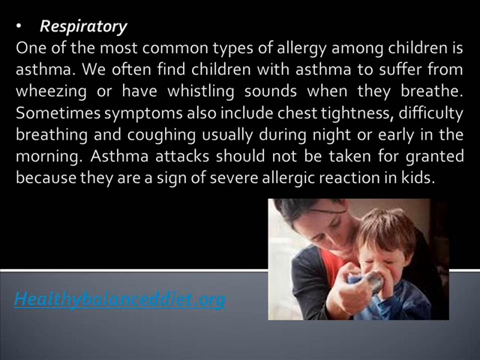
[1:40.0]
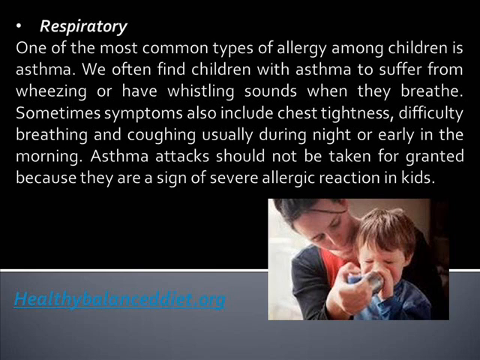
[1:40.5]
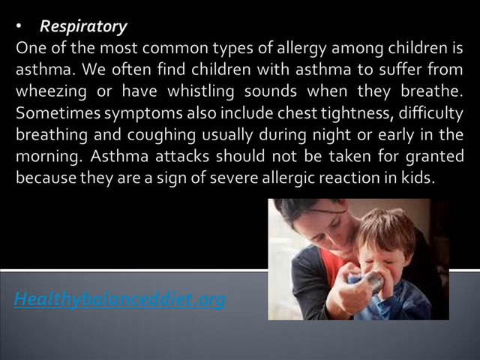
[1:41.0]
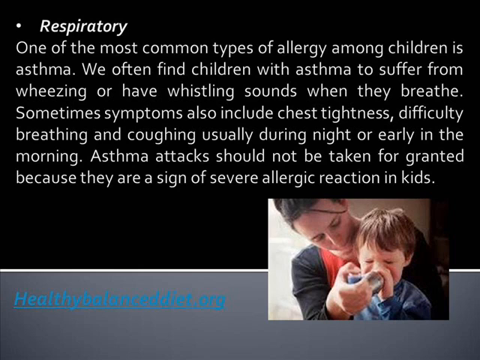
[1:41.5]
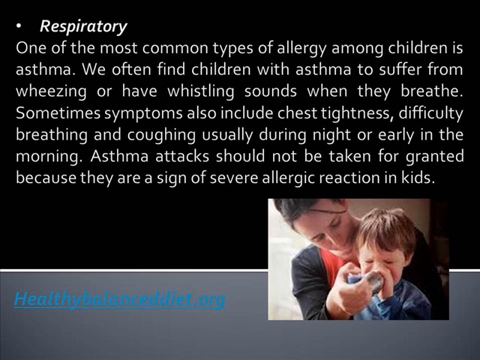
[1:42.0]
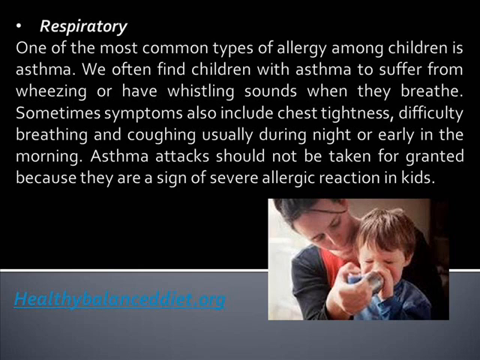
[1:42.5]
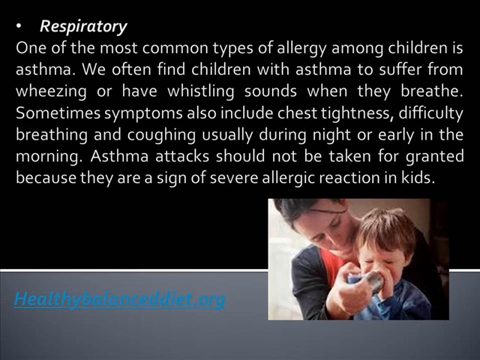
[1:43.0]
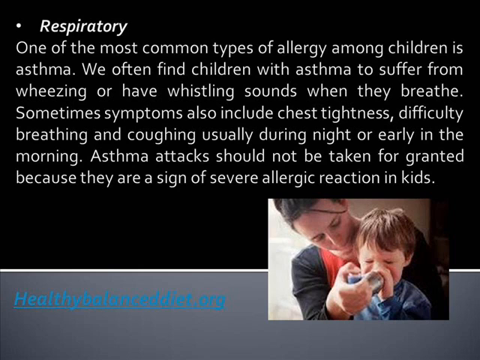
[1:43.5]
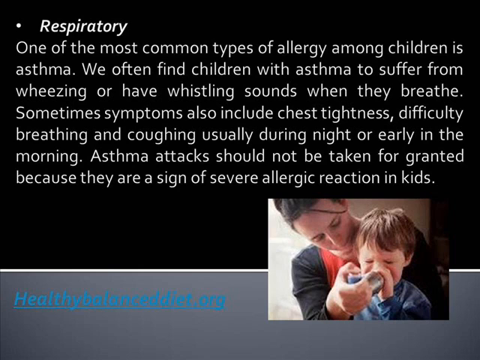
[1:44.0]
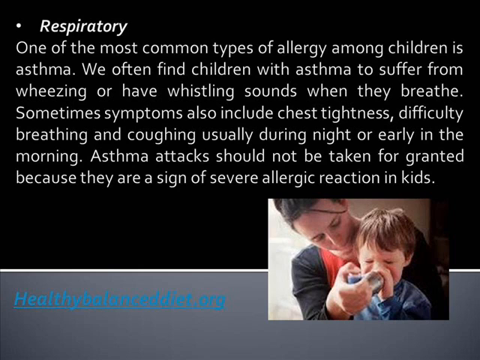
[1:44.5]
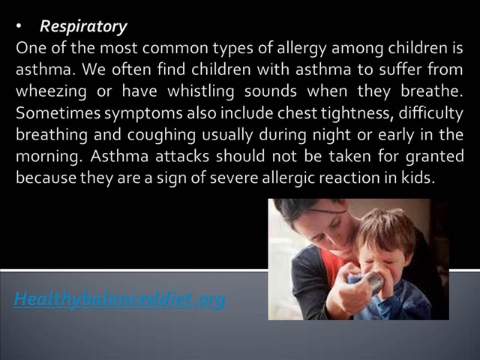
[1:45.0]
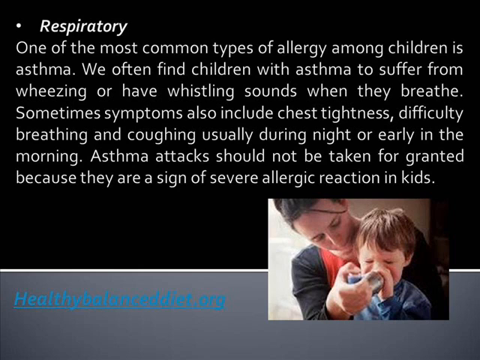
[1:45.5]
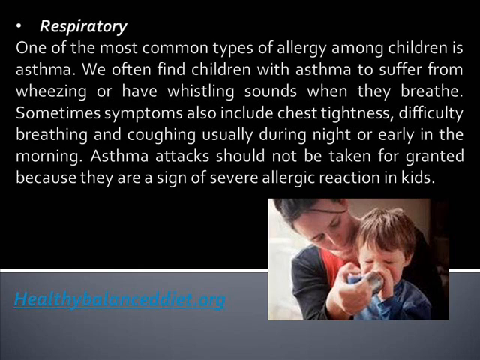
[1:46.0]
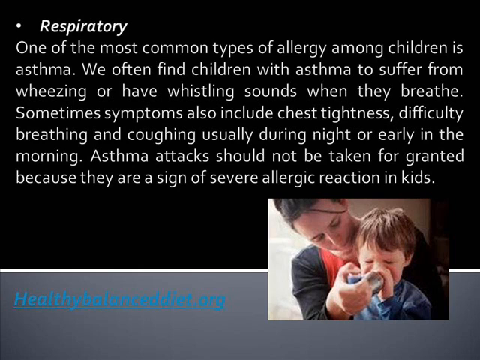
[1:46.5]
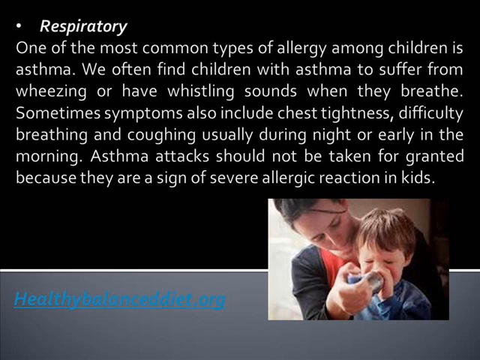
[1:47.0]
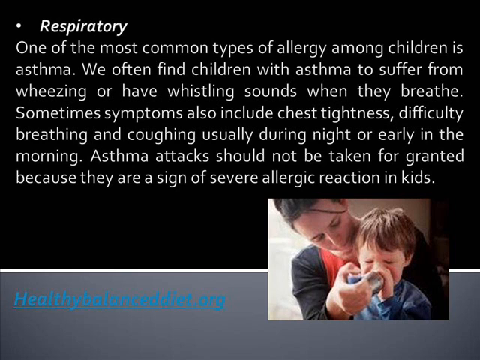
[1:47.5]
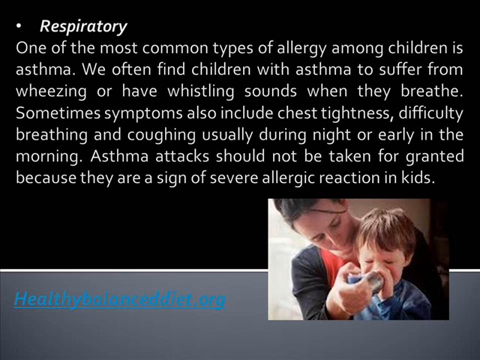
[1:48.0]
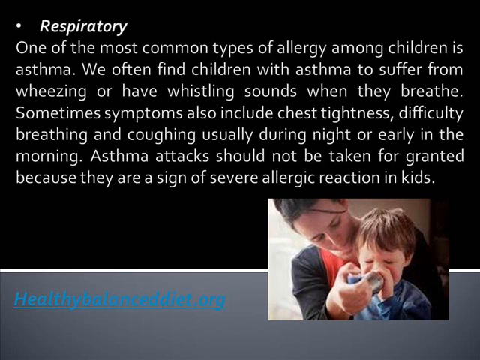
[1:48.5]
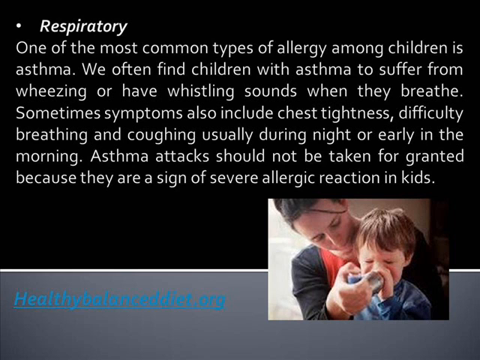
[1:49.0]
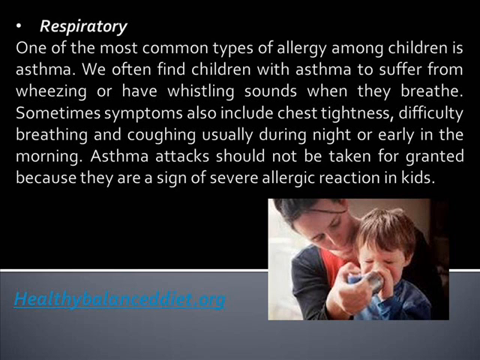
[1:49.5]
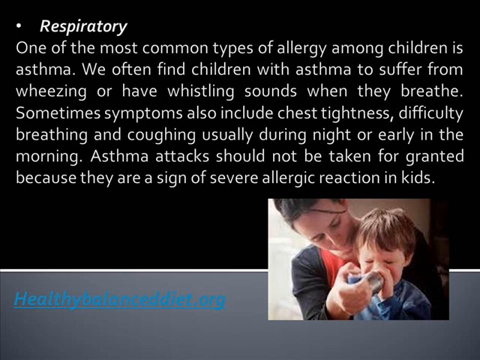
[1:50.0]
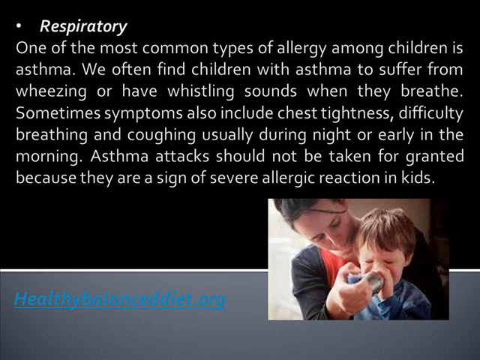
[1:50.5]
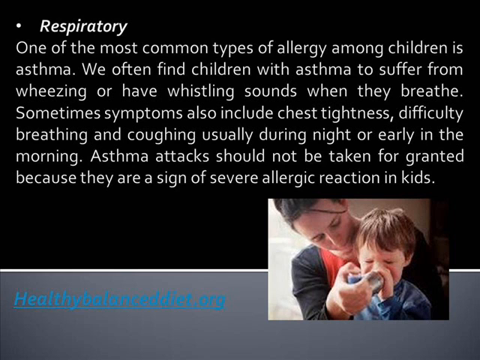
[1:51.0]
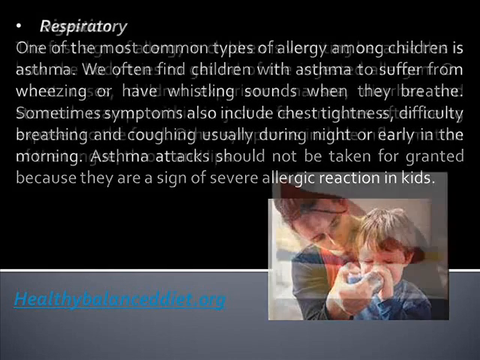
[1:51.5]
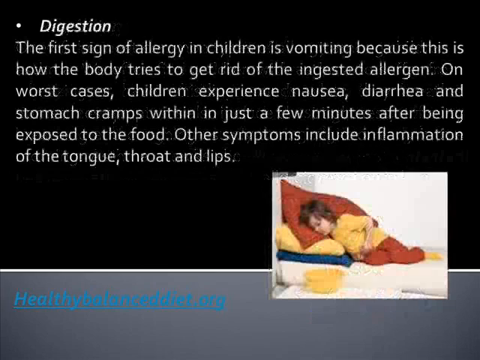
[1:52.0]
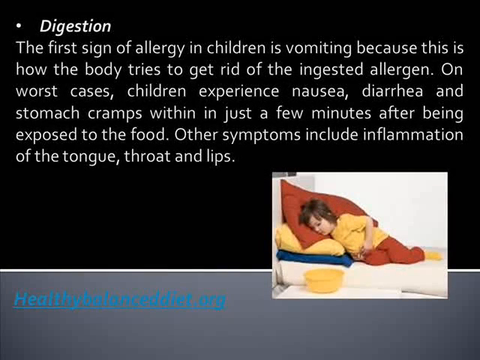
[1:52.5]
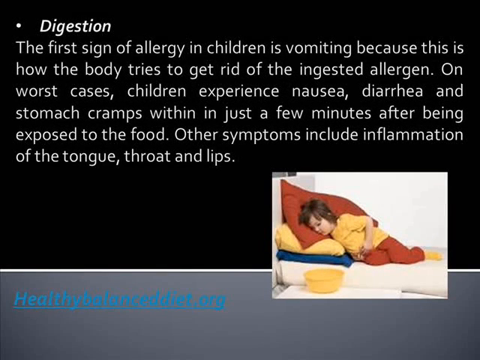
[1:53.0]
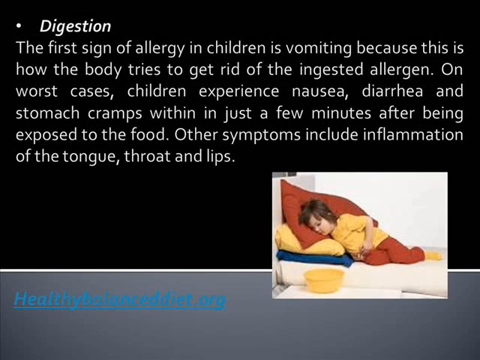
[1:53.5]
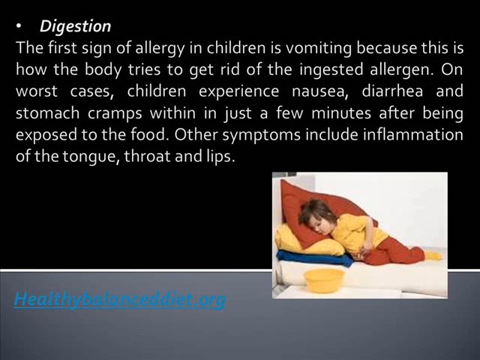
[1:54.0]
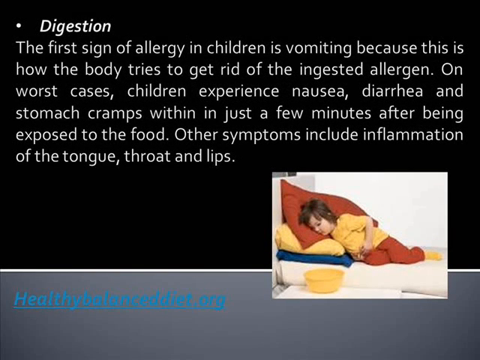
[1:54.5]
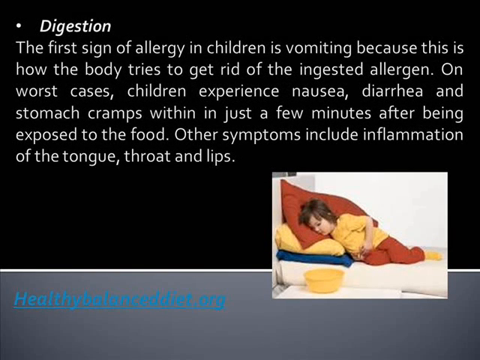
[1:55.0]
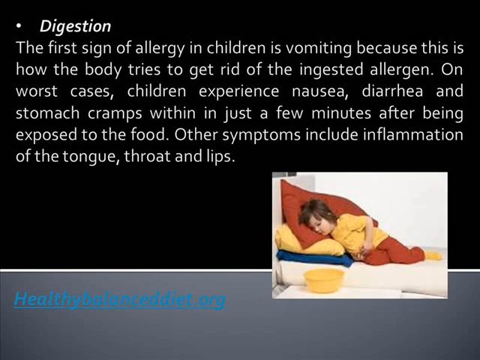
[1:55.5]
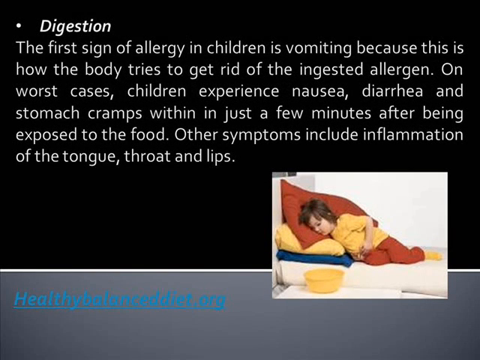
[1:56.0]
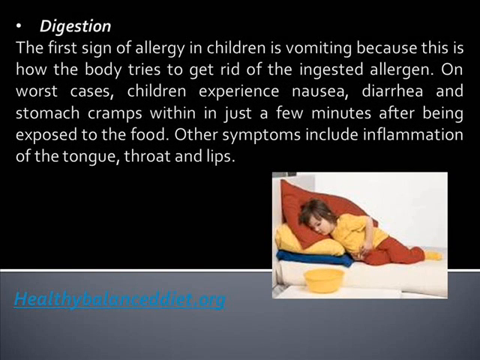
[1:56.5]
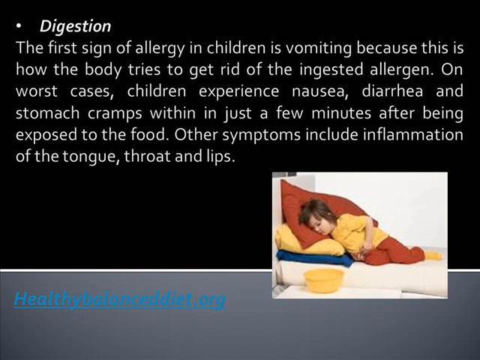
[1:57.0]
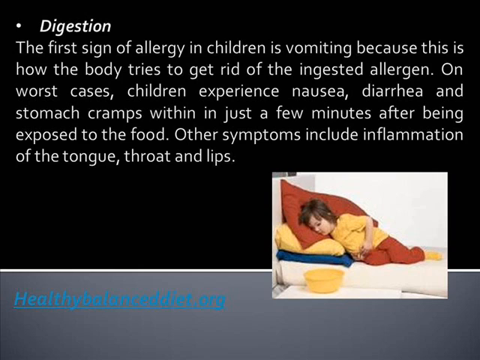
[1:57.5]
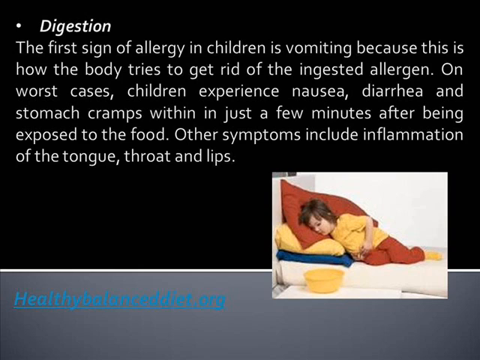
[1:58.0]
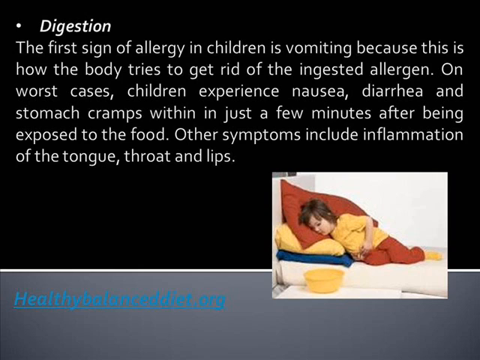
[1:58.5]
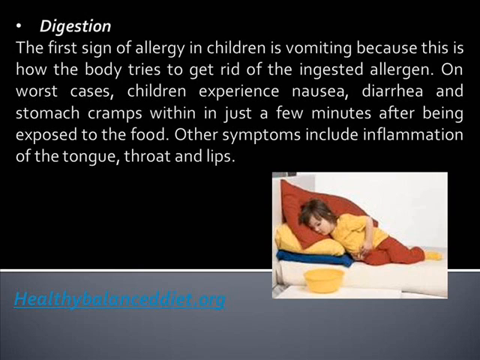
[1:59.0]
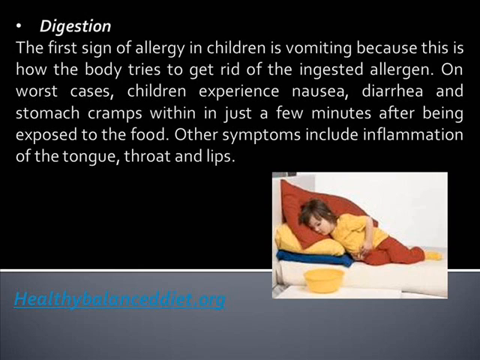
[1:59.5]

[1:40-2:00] New text appears, titled "Digestion" with a bullet point, reading, "The first sign of allergy in children is vomiting because this is how the body tries to get rid of the ingested allergen. On worst cases children experience nausea diarrhea and stomach cramps within just a few minutes after being exposed to the food. Other symptoms include inflammation of the tongue throat and lips." The bottom-right photo shows a child who looks unwell, lying on their right side on a very large red pillow and holding their stomach. The child has dark or medium brown shoulder-length hair with bangs and wears a yellow short-sleeved t-shirt, red pants, and yellow socks. The background is white, apparently a white bed, with a white mattress. Underneath the large red pillow appear to be a yellow pillow and then a blue pillow, stacked on the white mattress. On a white table in the foreground is a yellow bowl, possibly for the child to vomit in.